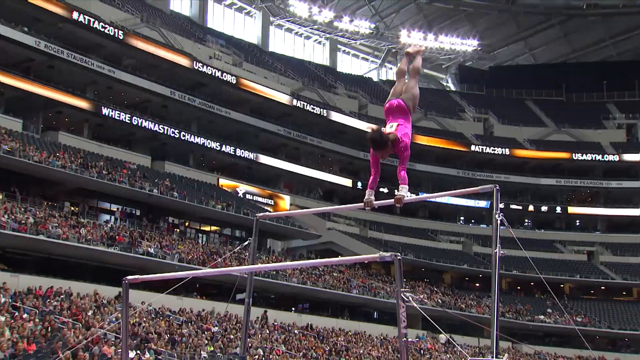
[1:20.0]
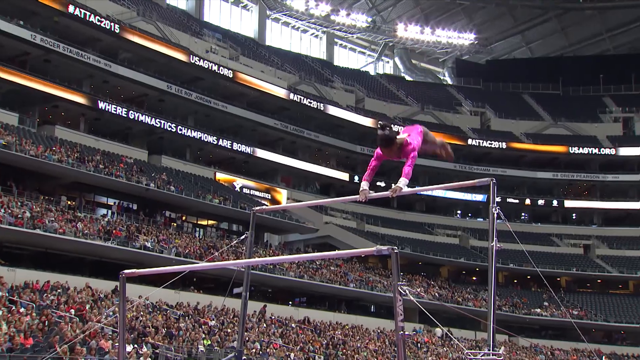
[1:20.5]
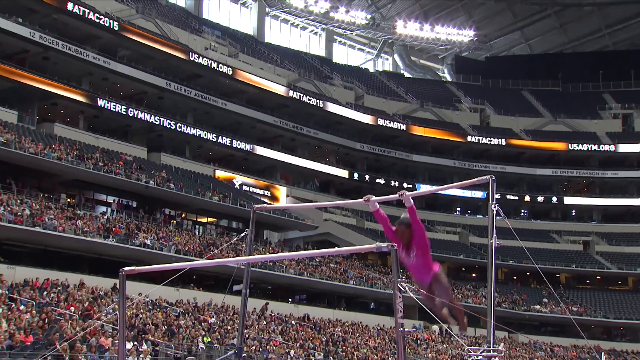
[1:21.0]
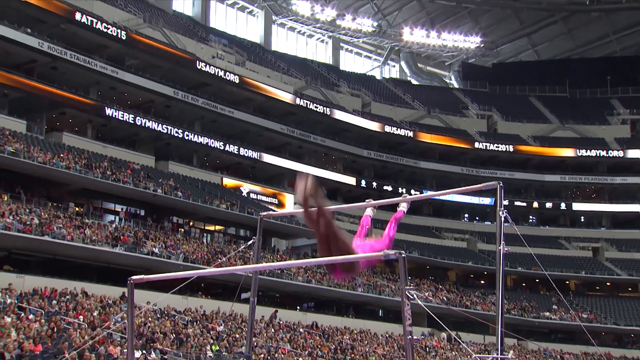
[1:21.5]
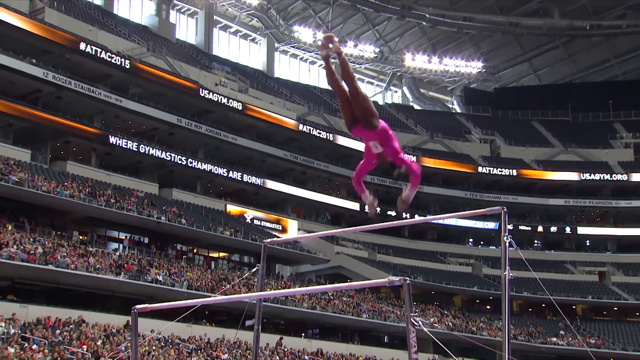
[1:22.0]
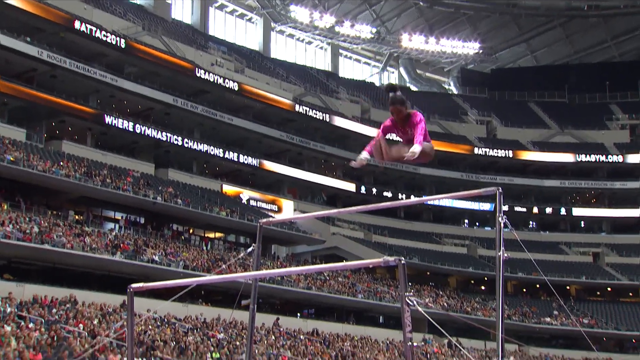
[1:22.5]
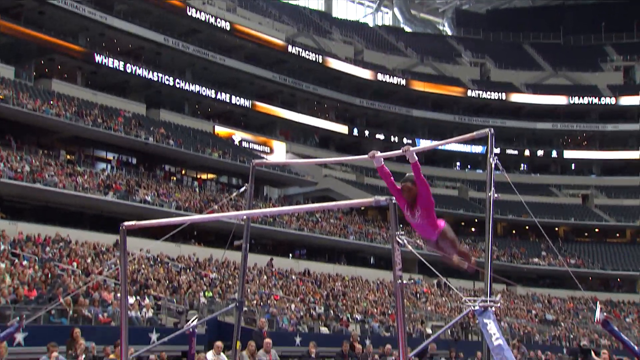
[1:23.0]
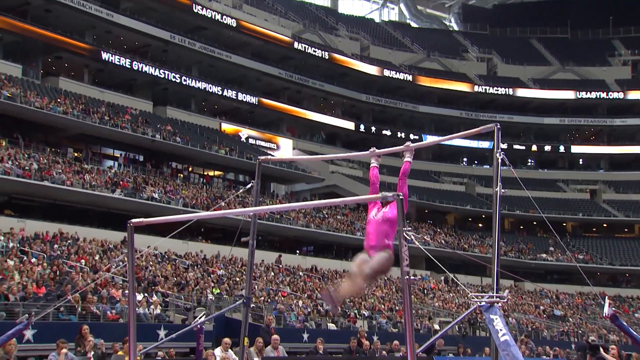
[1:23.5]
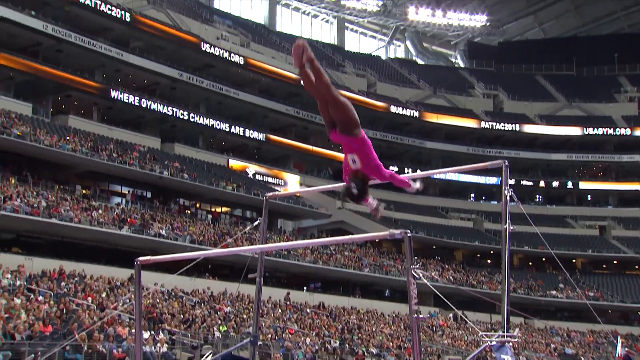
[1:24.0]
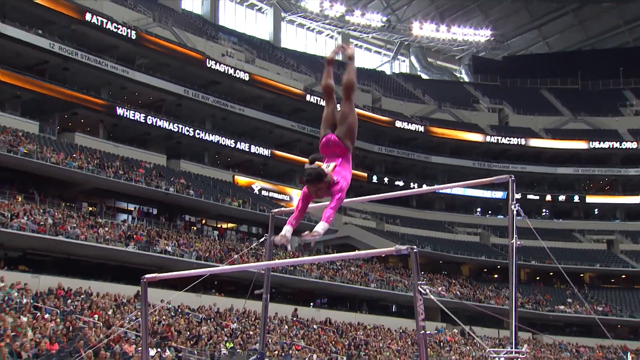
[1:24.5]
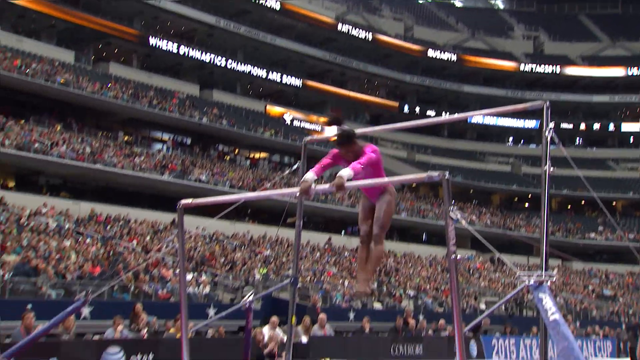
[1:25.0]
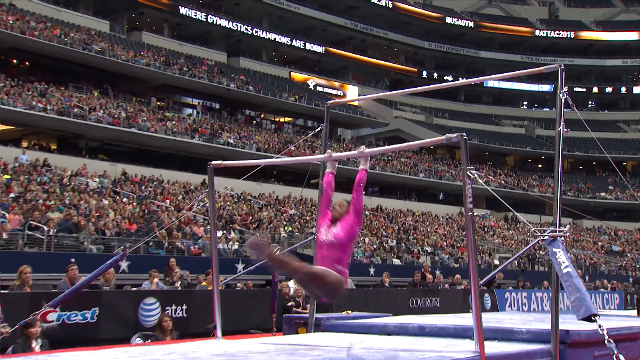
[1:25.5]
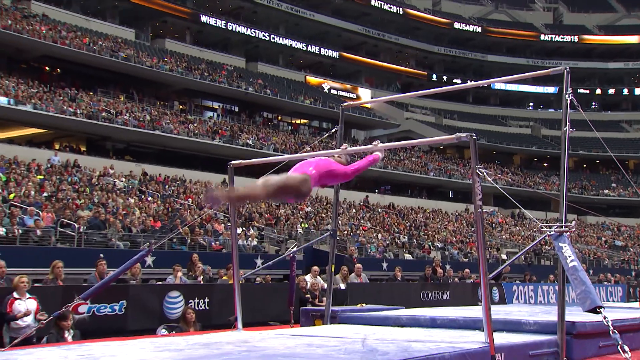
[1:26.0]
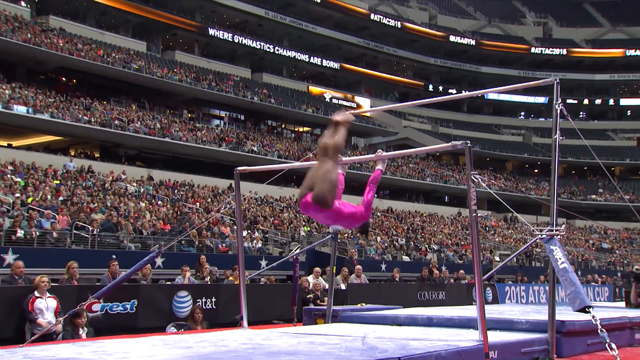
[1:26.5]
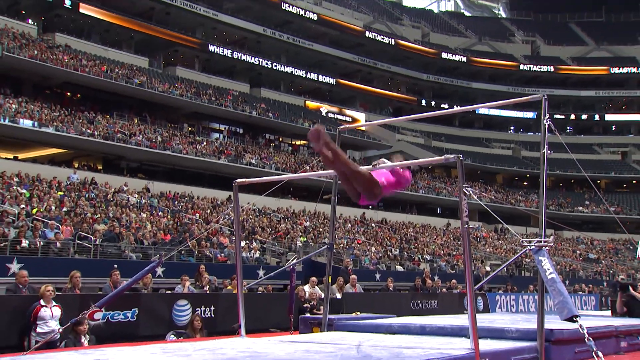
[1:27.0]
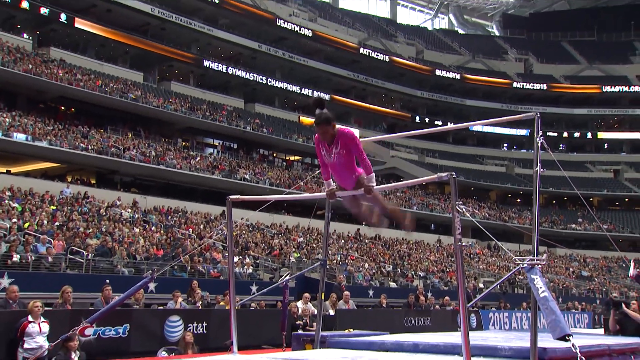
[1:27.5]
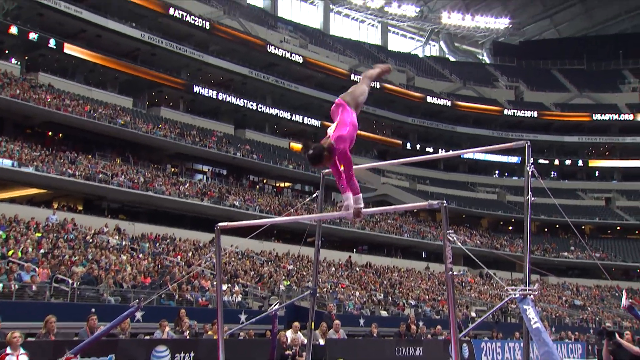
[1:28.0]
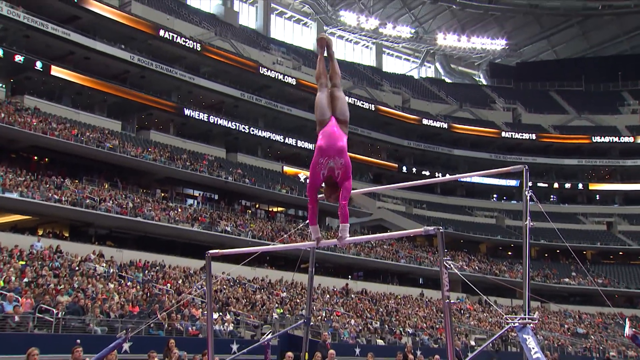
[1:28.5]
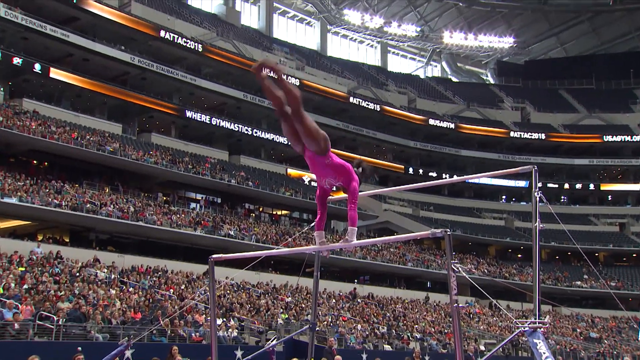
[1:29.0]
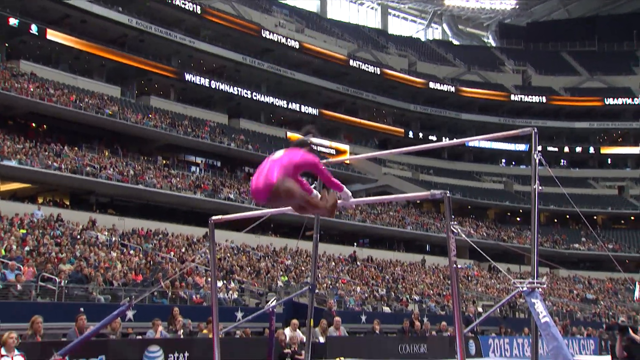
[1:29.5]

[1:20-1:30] Following the brief MSNBC logo, a replay of the gymnast's earlier performance is shown.